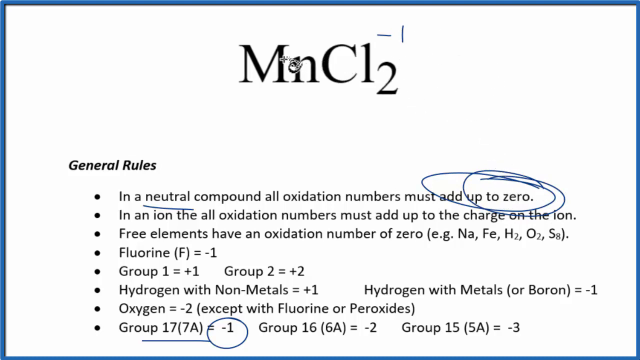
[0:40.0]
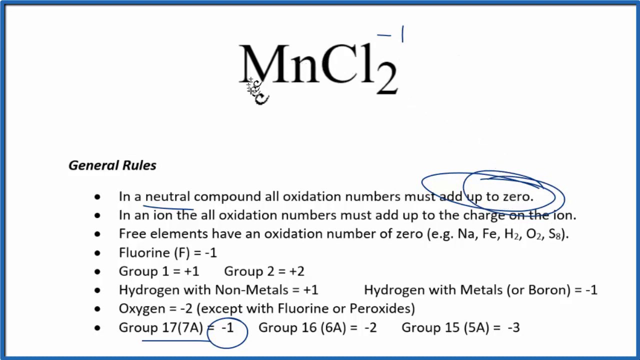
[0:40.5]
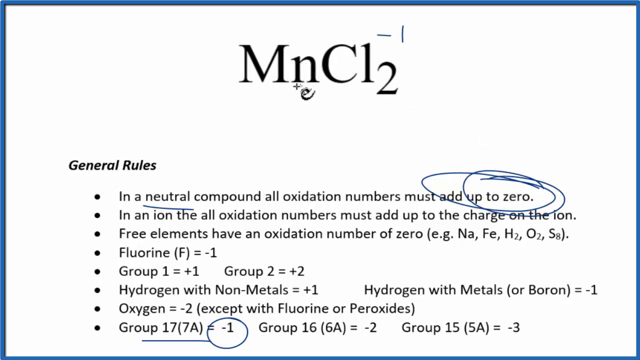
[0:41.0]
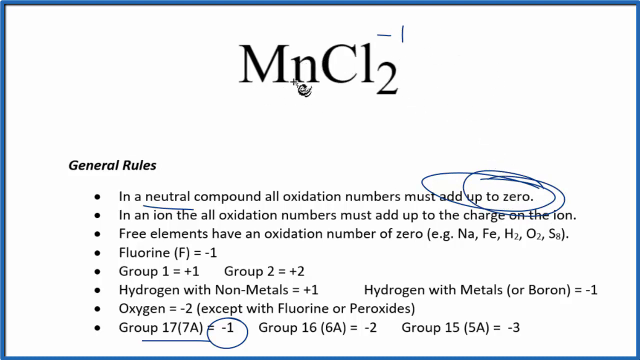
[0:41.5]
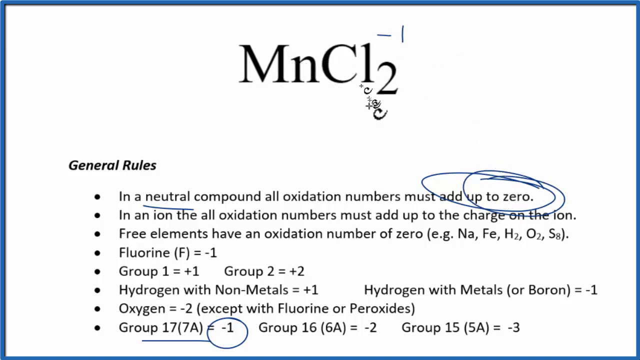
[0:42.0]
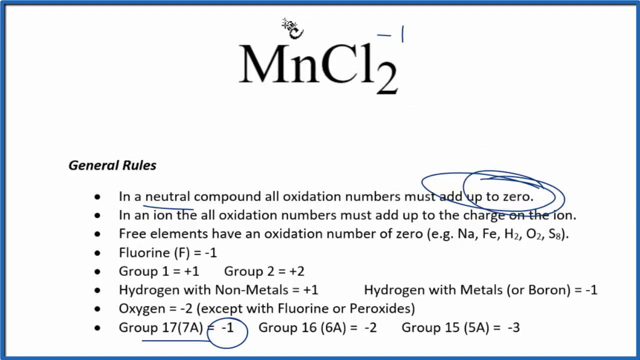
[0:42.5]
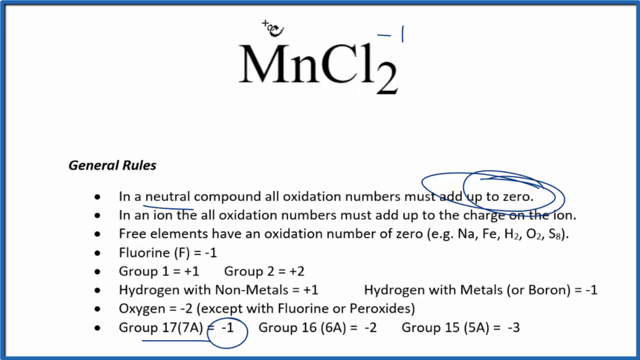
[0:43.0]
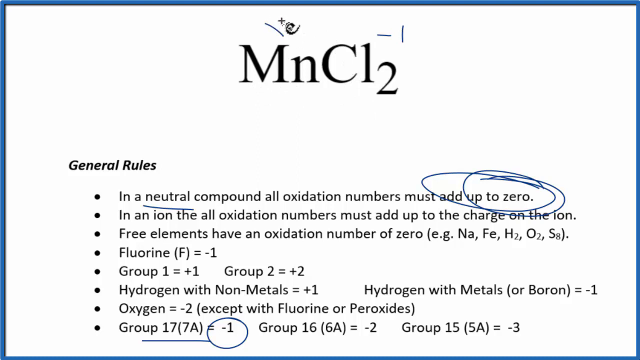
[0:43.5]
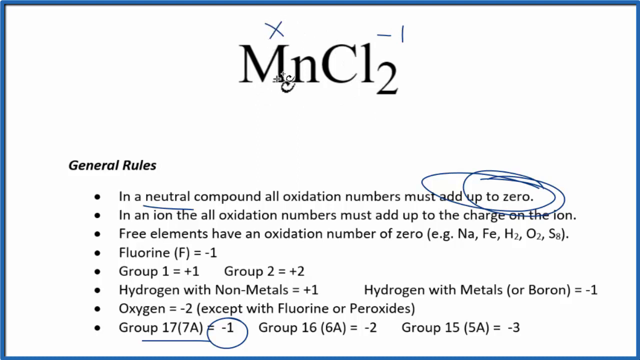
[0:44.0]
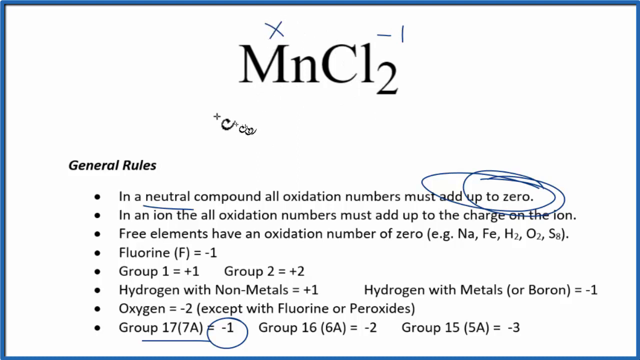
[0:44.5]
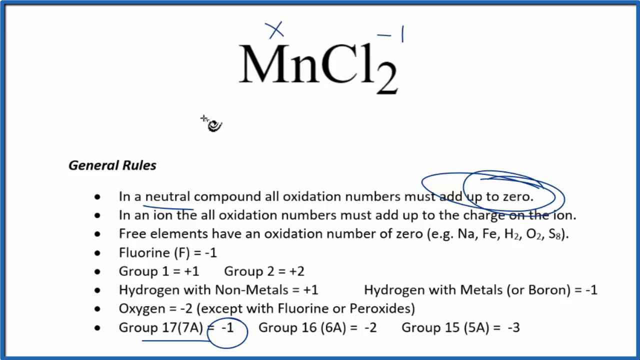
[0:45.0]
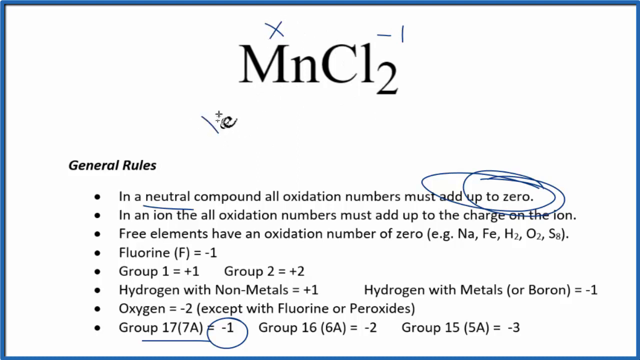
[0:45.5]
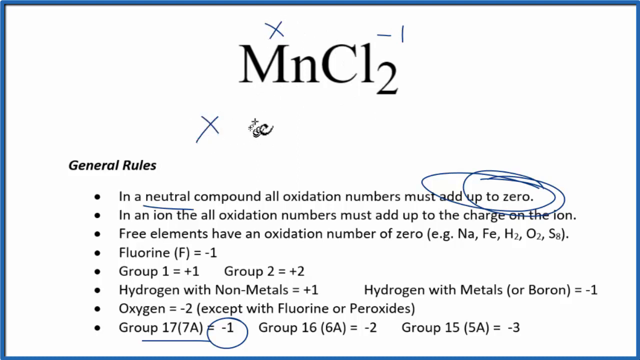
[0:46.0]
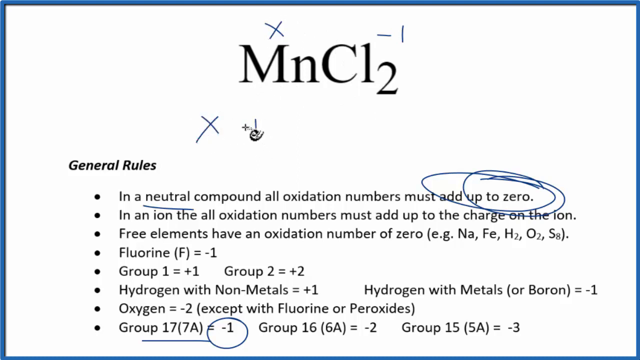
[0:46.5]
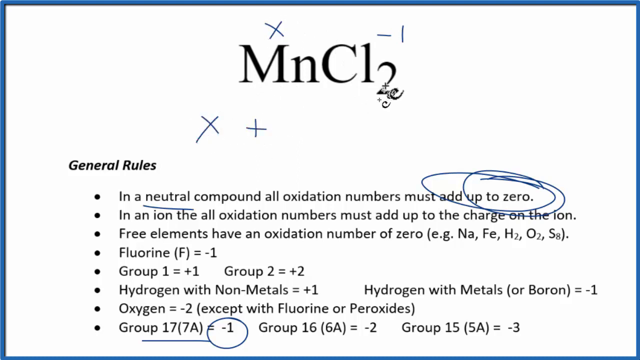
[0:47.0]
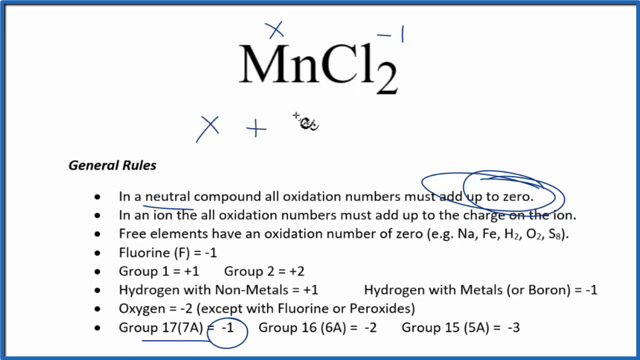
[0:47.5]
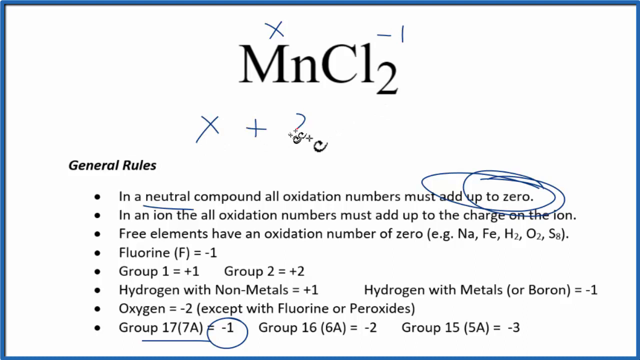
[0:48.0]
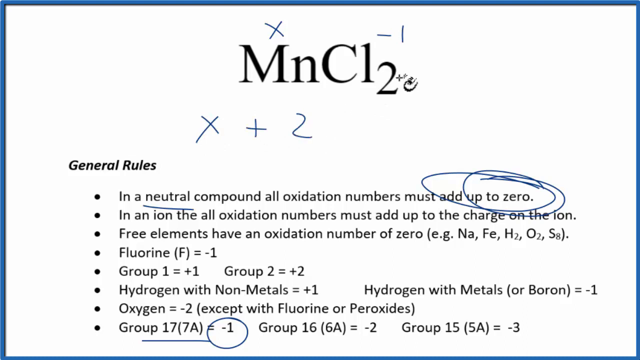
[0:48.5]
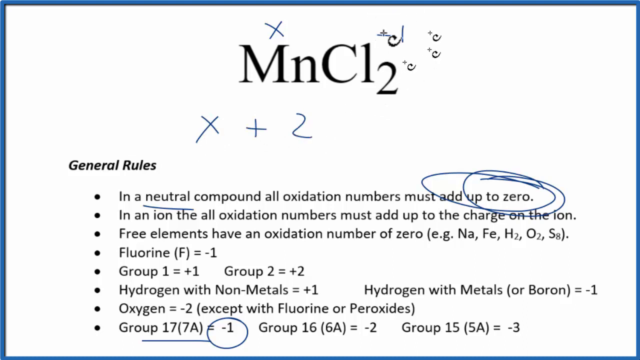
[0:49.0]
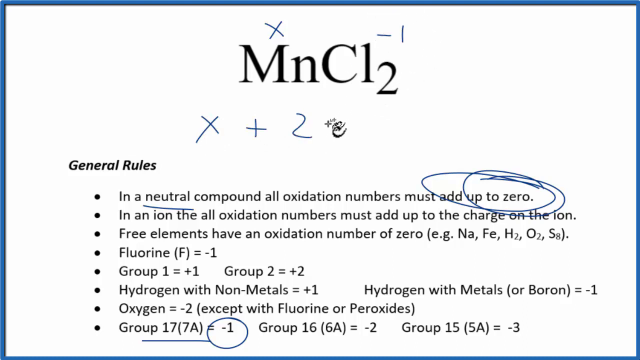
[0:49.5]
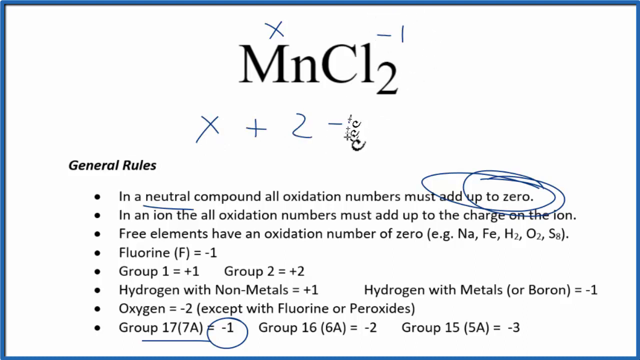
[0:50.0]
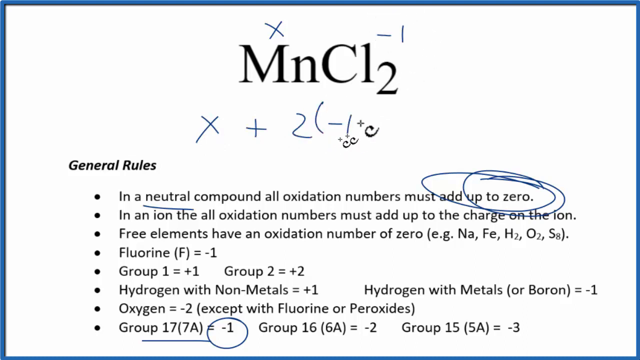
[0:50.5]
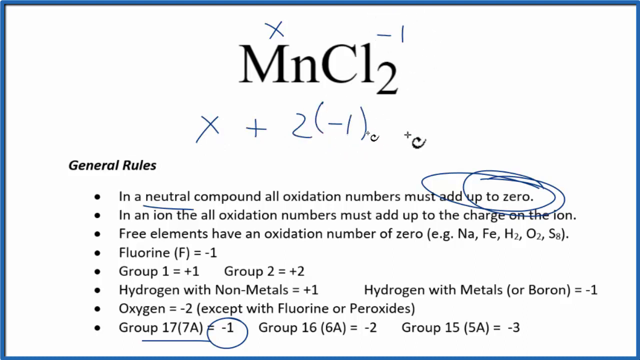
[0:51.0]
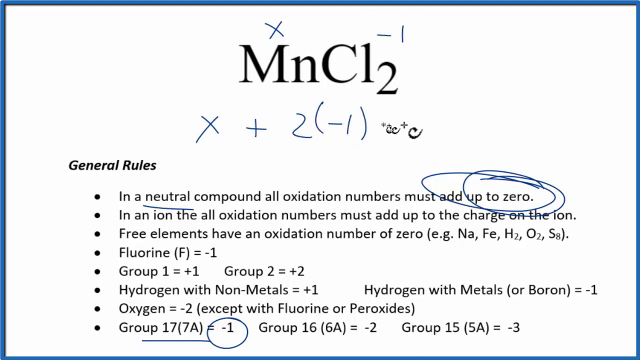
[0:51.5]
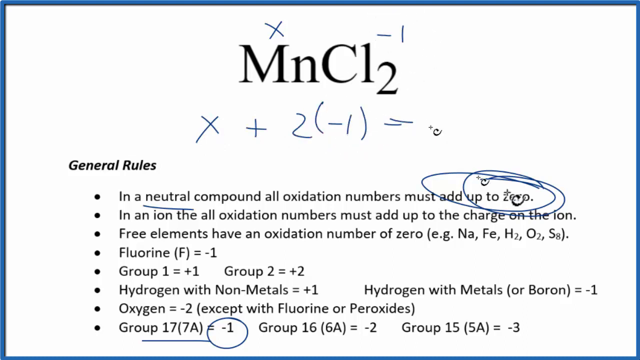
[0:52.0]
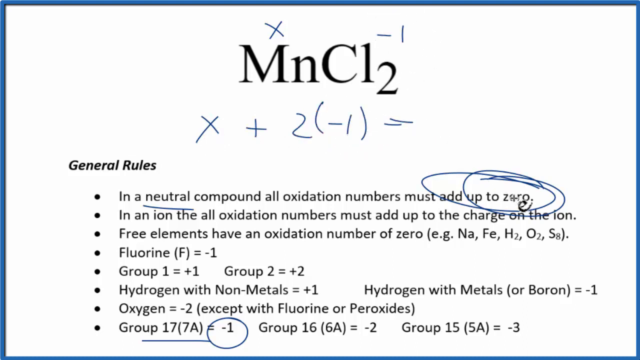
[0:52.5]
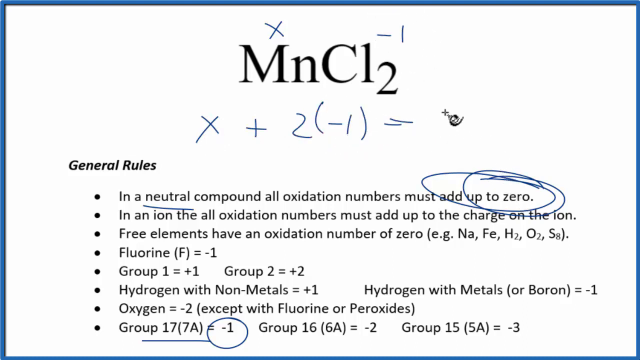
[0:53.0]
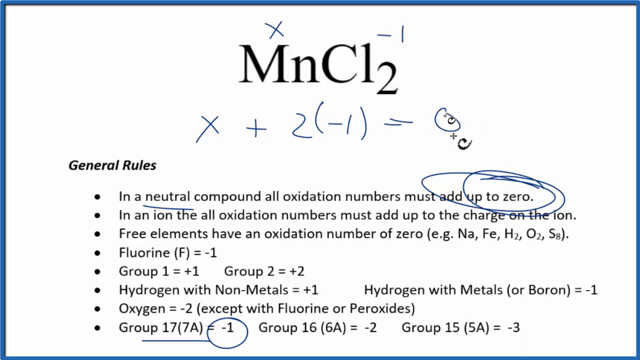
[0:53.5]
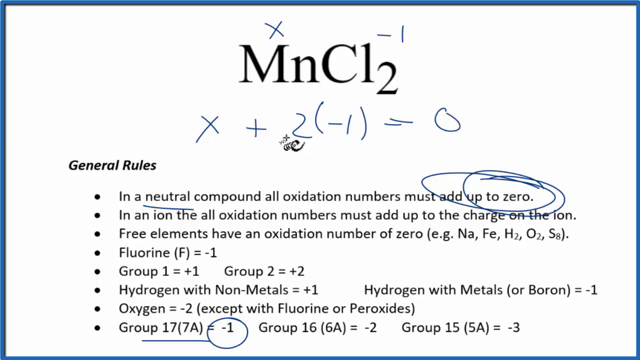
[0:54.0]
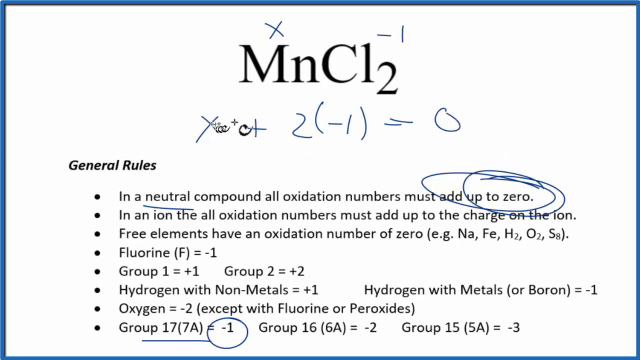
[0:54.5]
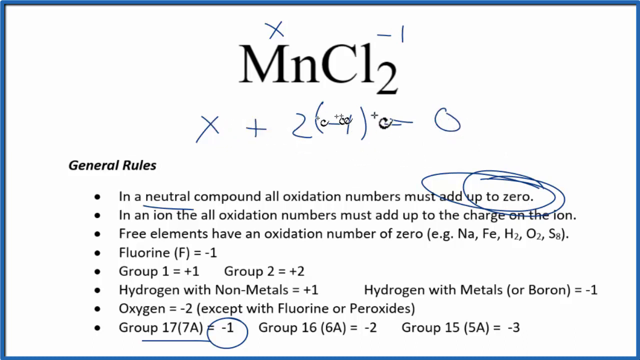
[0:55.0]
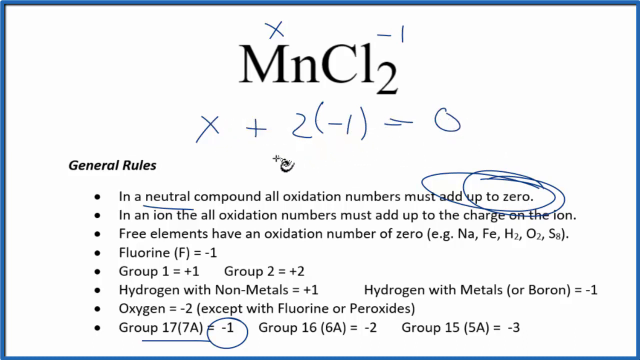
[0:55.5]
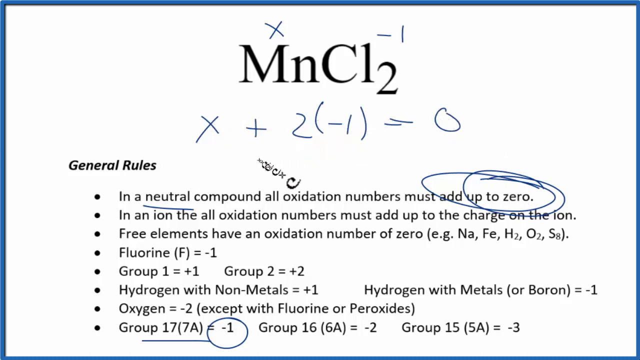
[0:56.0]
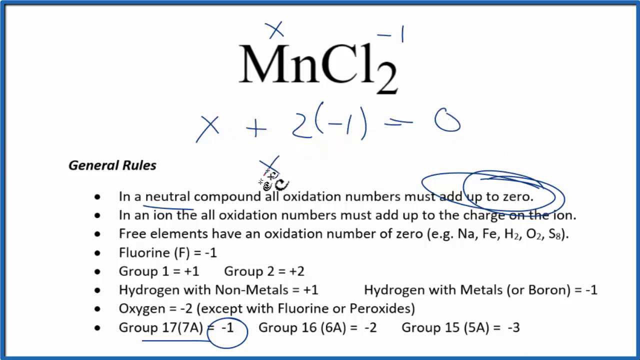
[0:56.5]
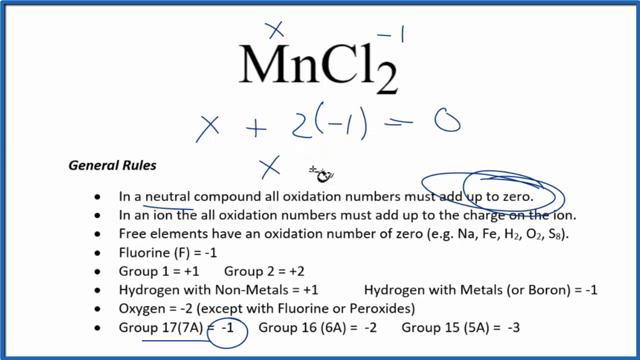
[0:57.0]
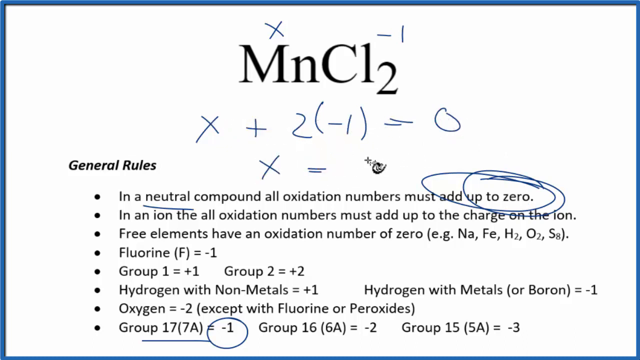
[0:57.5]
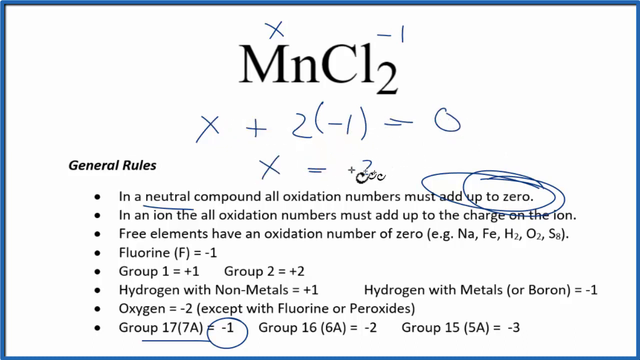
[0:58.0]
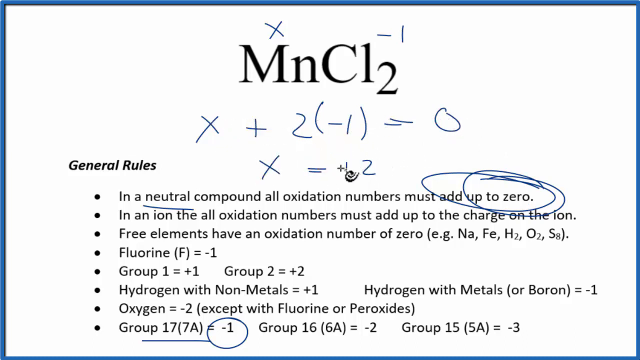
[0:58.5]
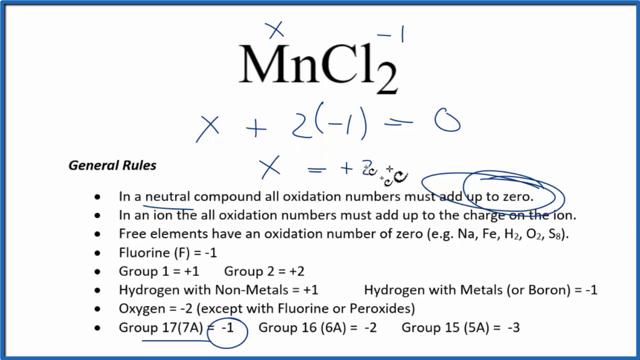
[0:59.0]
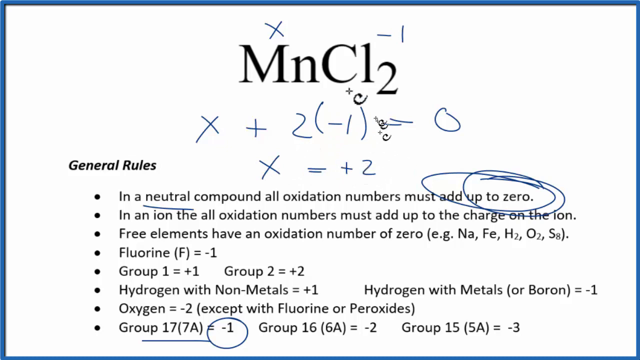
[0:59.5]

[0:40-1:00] A slide from a slideshow presentation has a white background and blue outlines. The title is "MNCL2", with a handwritten negative one above and to the right of the "CL2". Below, under a subtitle reading "General Rules", is a series of bullet points. The first reads "in a neutral compound, all oxidation numbers must add up to zero," with a handwritten blue line under "neutral", a circle around "add up to zero", and an additional circle around "up to zero". Further down, the negative one in "group 17 (7A) equals negative one" is circled. At the top of the screen the cursor draws an imaginary line between the M and the N in "MNCL2", then draws an X above the right post of the M. It moves to a space below and to the left of the title, draws another X, and writes a plus sign and the number two. It slides up and to the right to circle the negative one above the title, then writes minus one next to the two, puts the minus one in parentheses, draws an equal sign, and writes zero. The cursor traces an imaginary line over the left half of the equation before writing "X = +2". The cursor has a squiggly line dangling below it to its right.